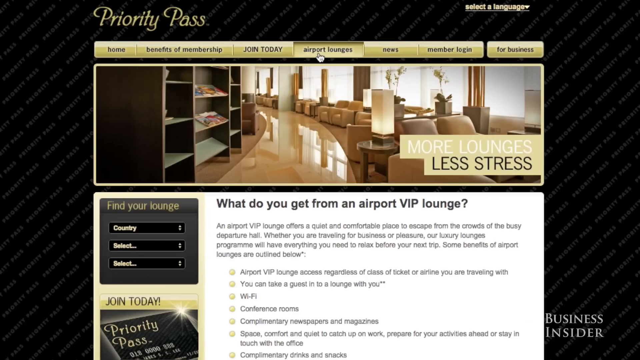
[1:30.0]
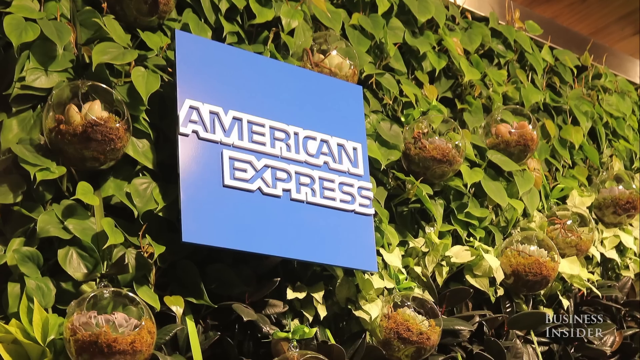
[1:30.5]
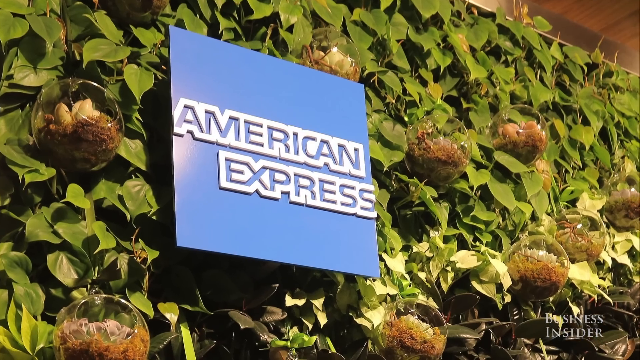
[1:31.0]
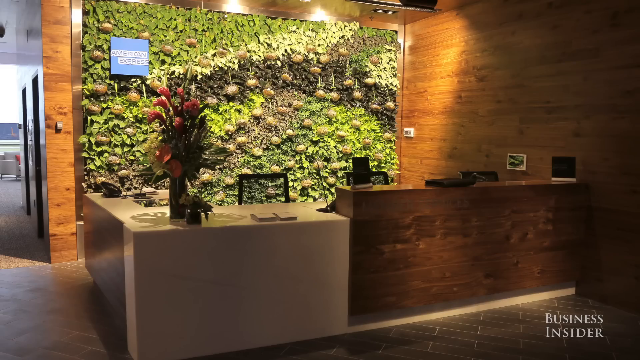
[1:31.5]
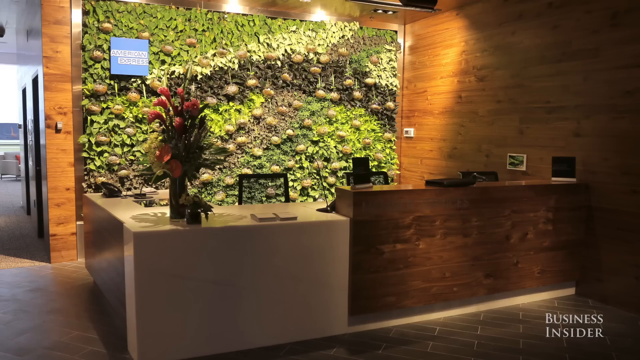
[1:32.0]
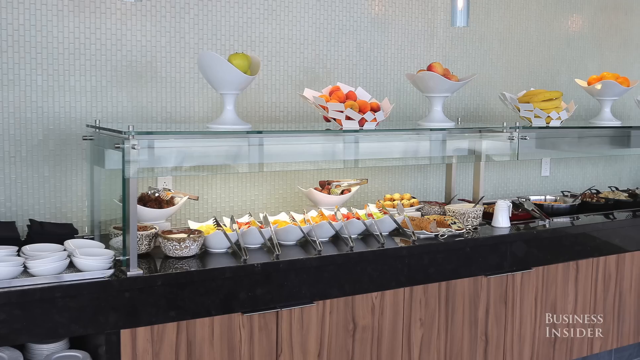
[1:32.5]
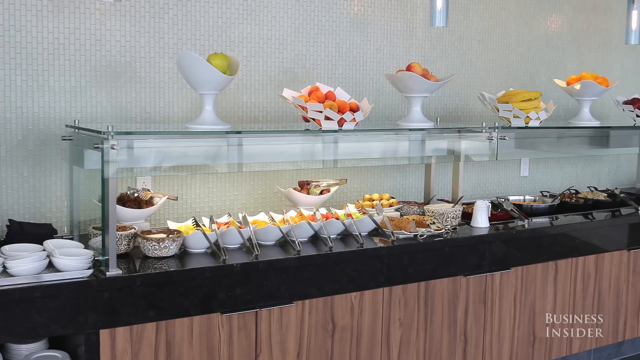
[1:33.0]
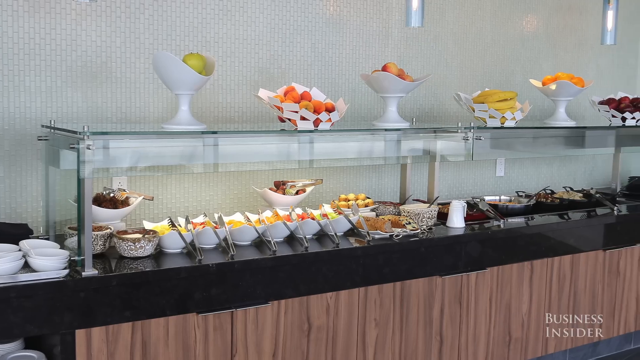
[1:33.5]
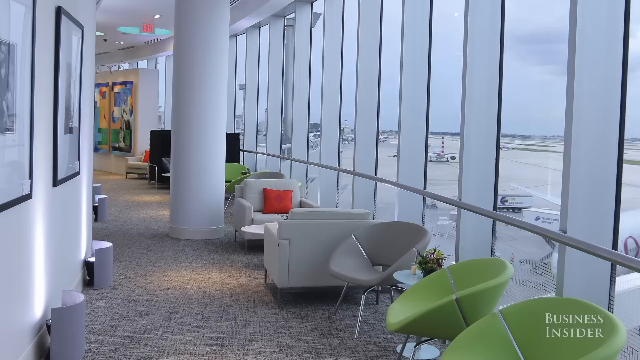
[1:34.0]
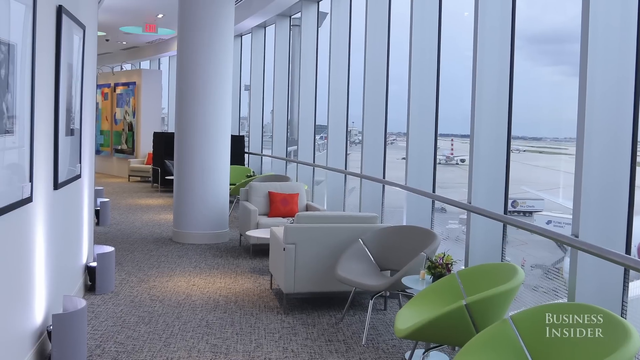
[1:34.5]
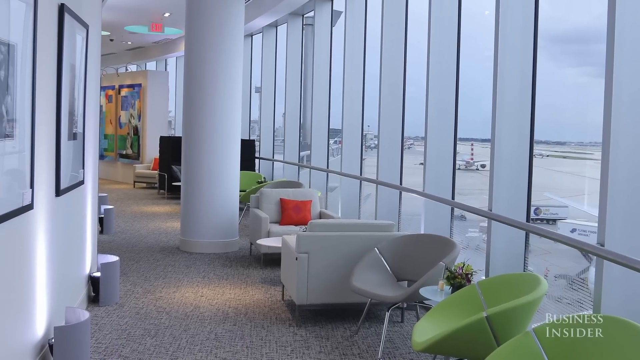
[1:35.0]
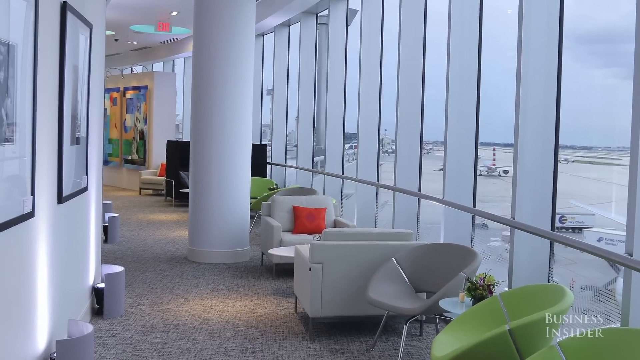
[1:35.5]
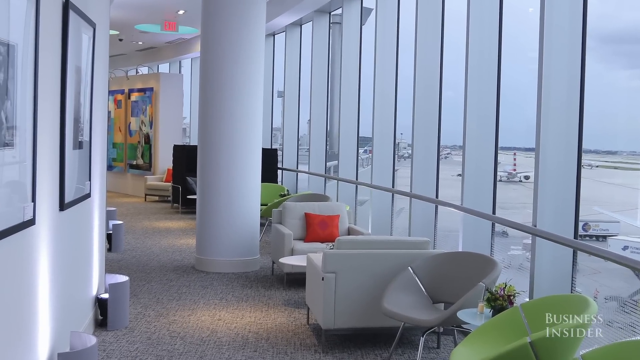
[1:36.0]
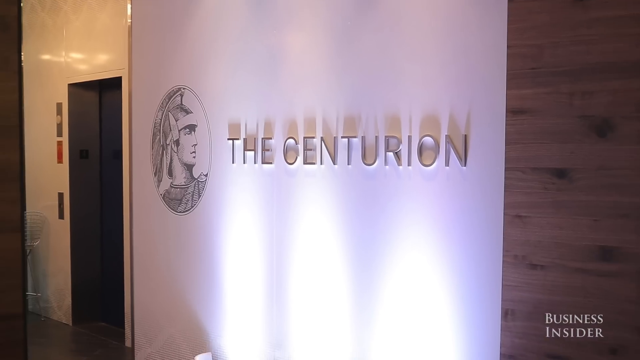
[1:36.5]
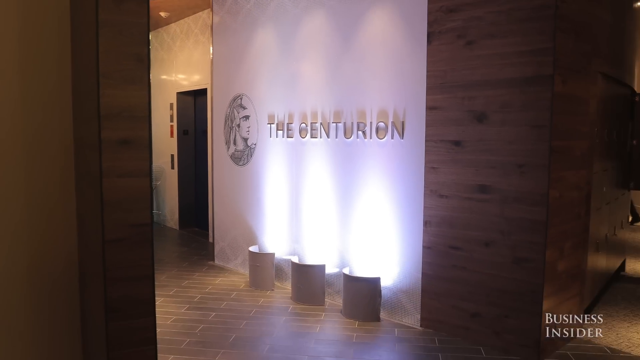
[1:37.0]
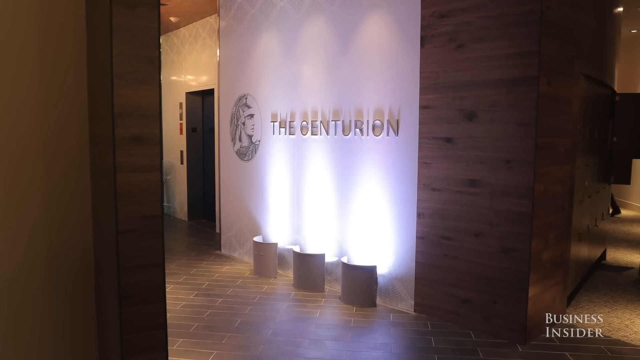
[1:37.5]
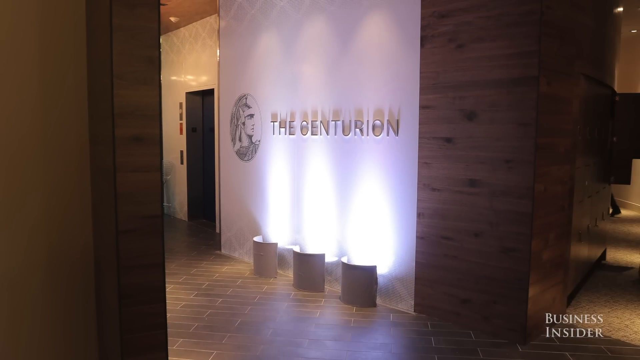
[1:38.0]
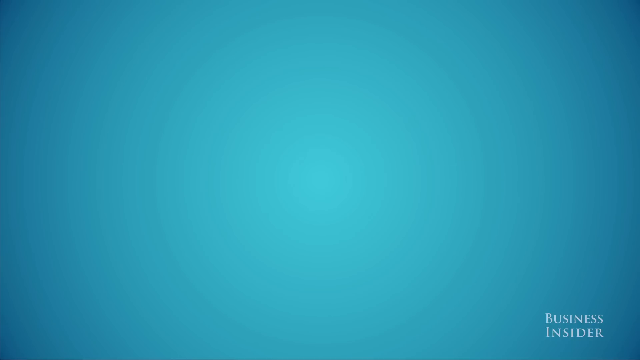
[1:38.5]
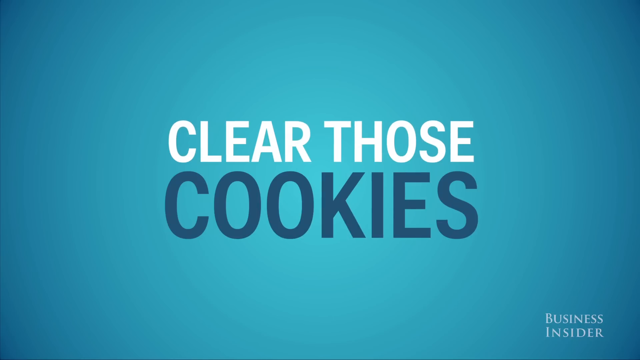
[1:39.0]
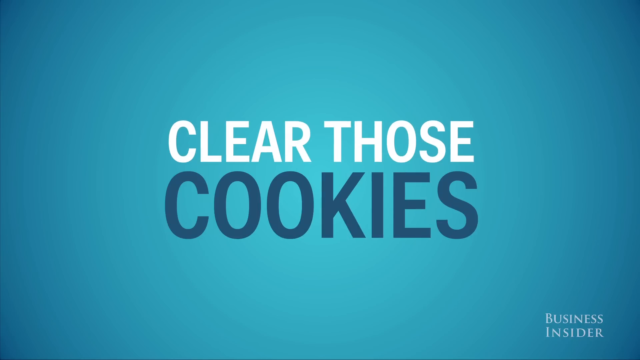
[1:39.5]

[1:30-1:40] "American Express" appears on a wall of ivy, with glass bowls on the ivy wall. A desk, a buffet of food and a picture are shown, along with "the Centurion" and text reading "clear those cookies." A lounge has white chairs, a column, and floors that look tiled. Fruits are in white bowls, and a chair has a peach pillow. Pictures of cookies and food appear, as well as an elevator, white and yellow, red and green chairs, a wood wall, white bowls filled with food, a black chair, and something white and blue. A Centurion appears with a Centurion soldier. There is a countertop, a buffet of food, and pictures on the wall of the room.